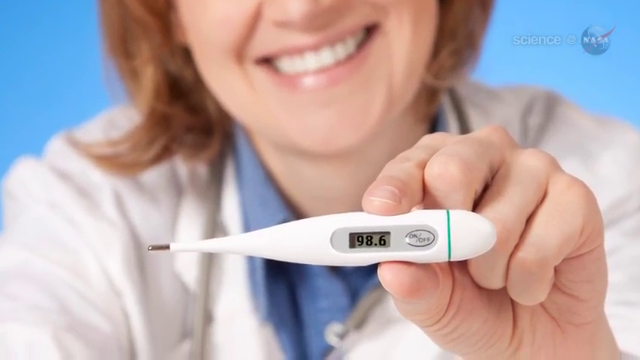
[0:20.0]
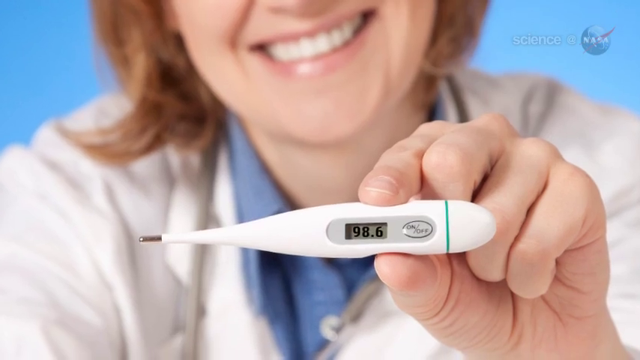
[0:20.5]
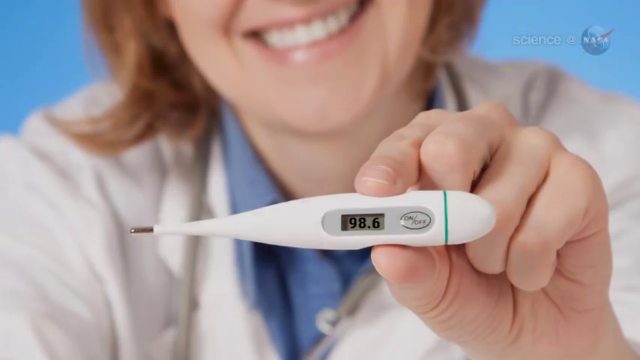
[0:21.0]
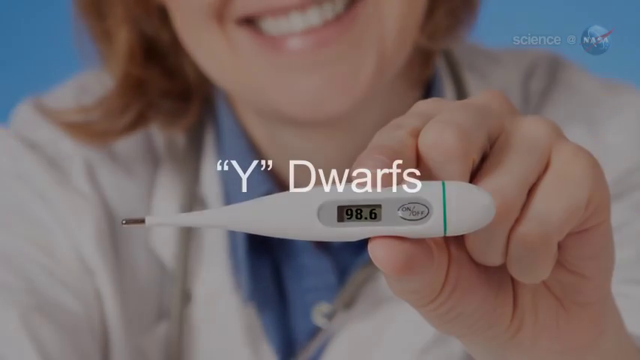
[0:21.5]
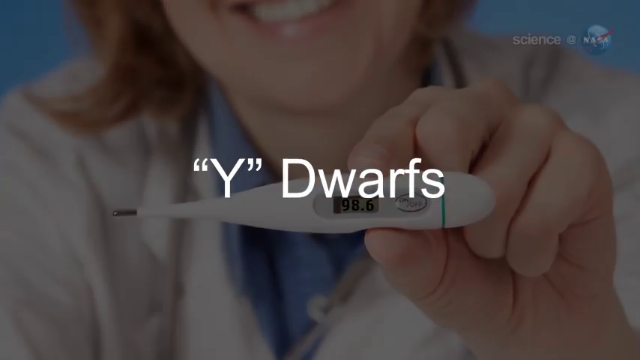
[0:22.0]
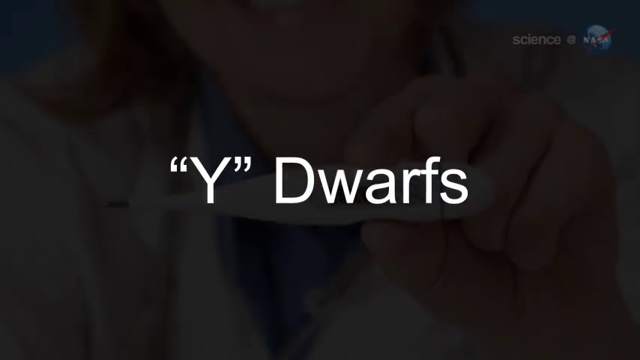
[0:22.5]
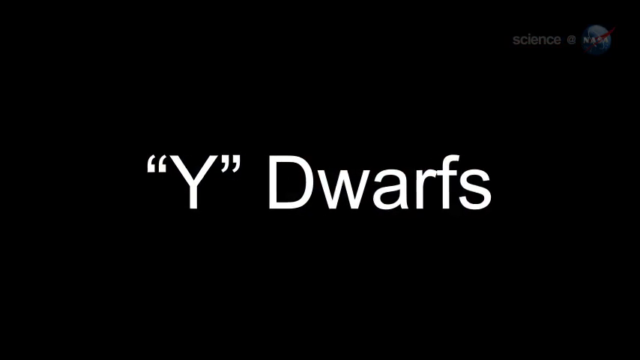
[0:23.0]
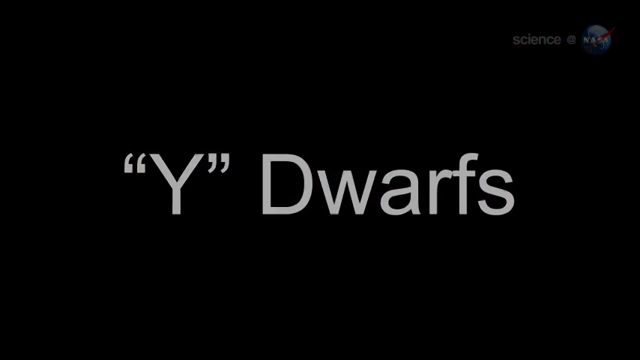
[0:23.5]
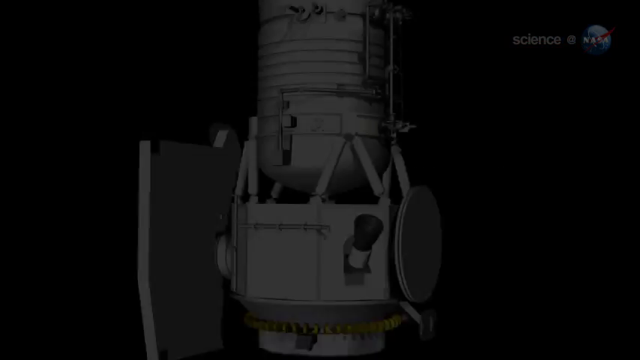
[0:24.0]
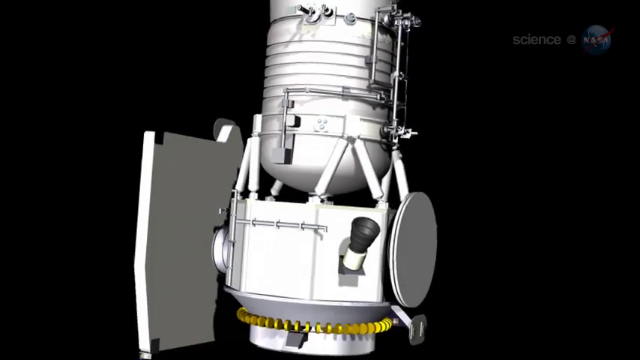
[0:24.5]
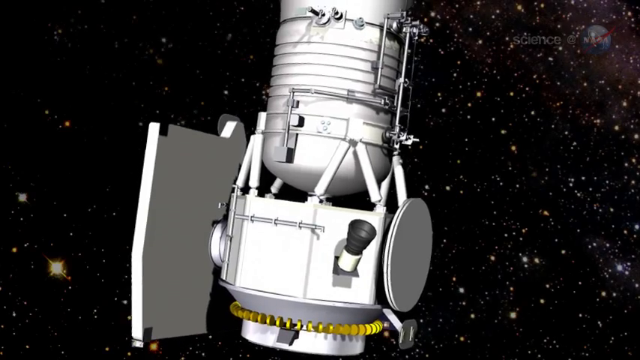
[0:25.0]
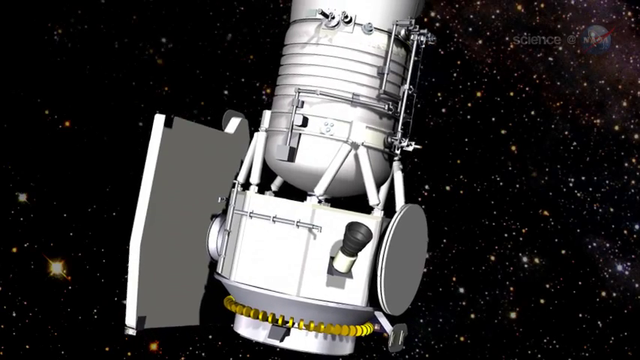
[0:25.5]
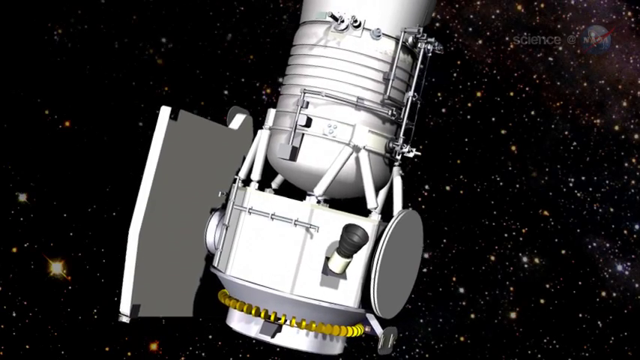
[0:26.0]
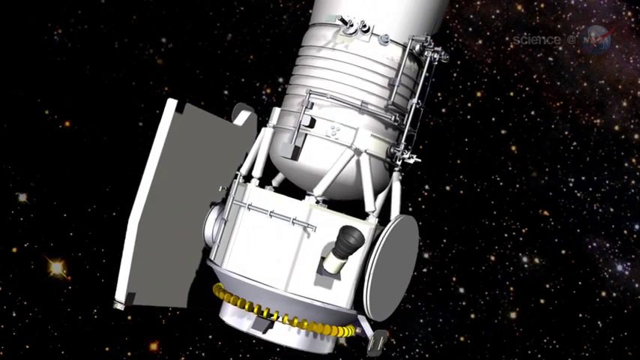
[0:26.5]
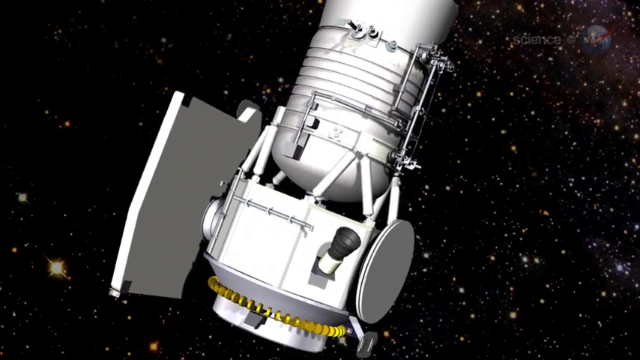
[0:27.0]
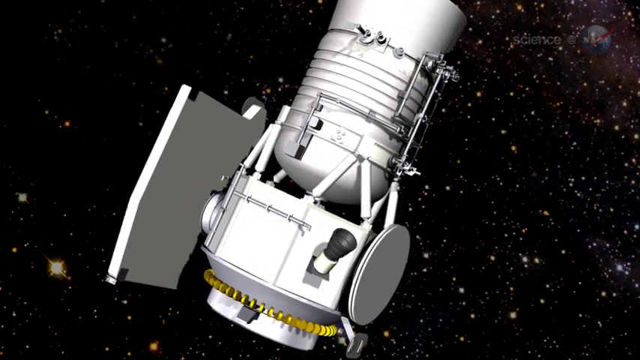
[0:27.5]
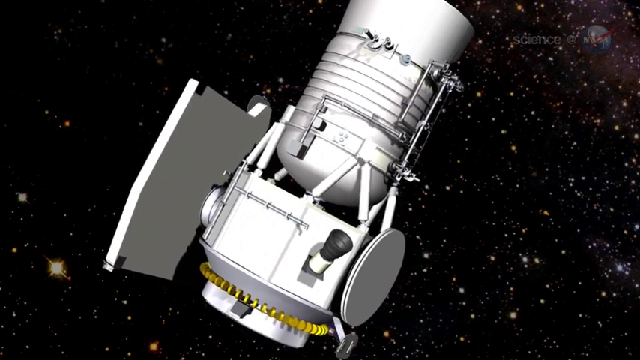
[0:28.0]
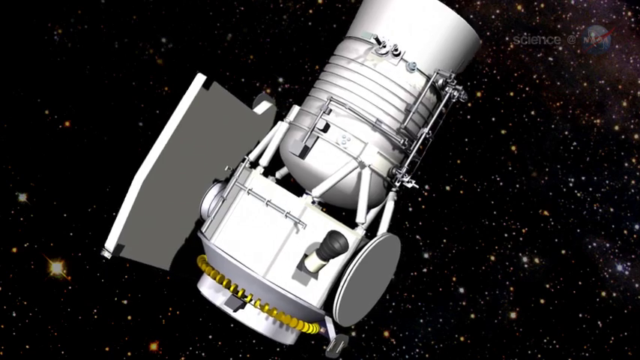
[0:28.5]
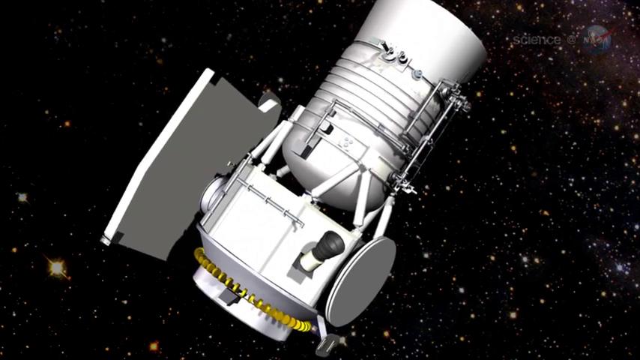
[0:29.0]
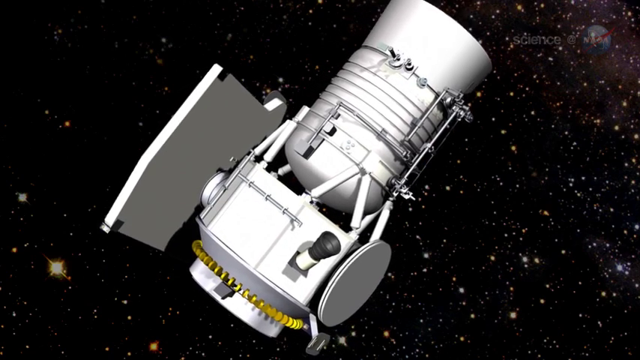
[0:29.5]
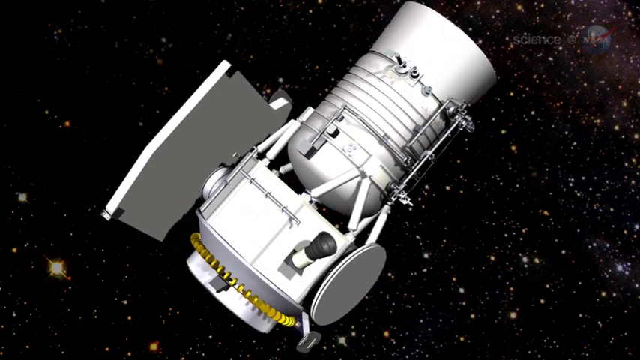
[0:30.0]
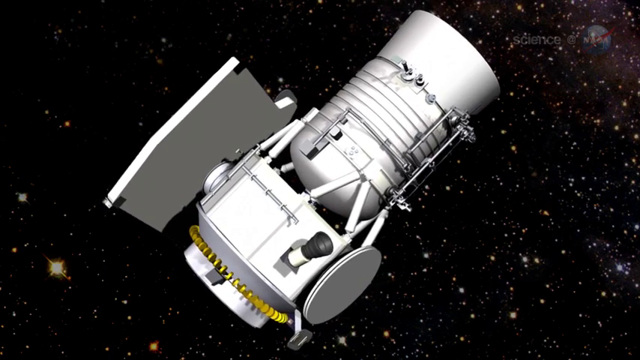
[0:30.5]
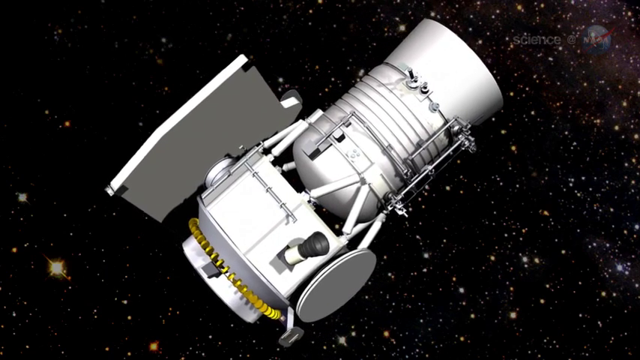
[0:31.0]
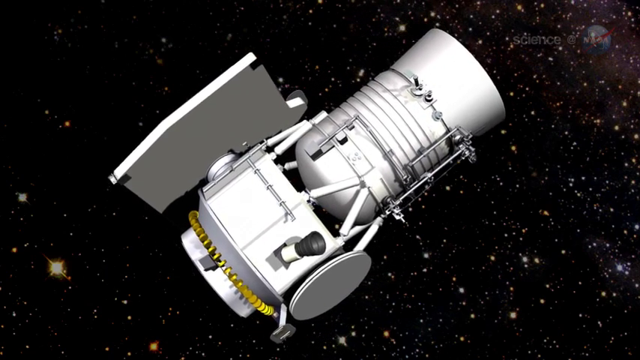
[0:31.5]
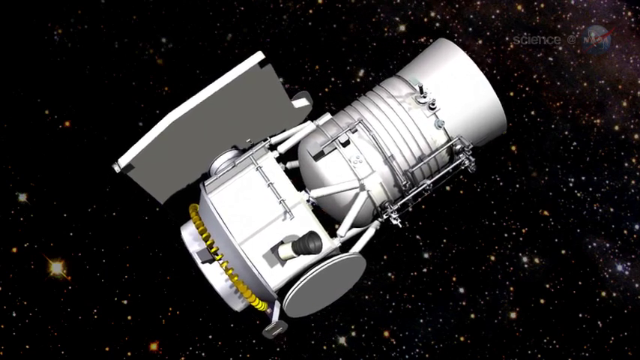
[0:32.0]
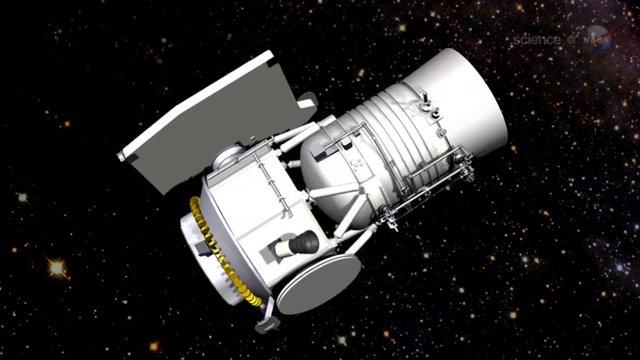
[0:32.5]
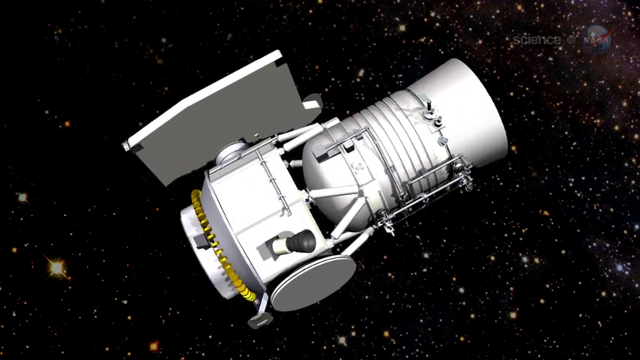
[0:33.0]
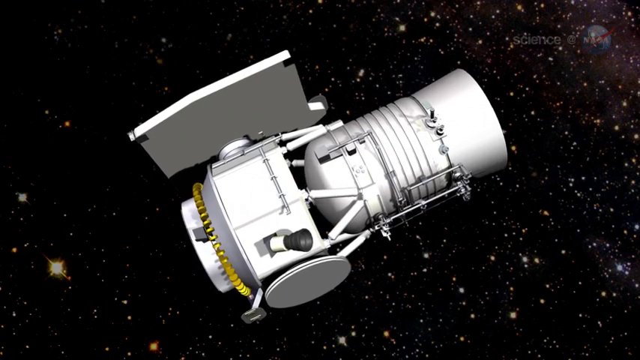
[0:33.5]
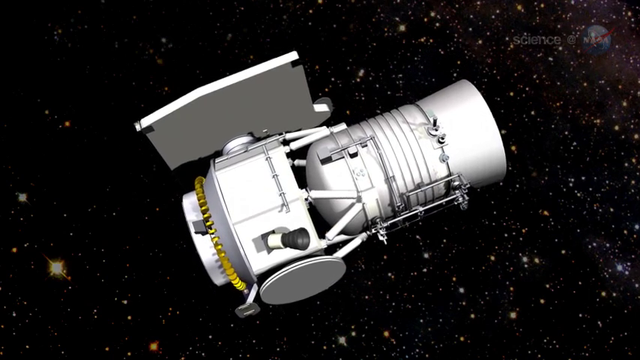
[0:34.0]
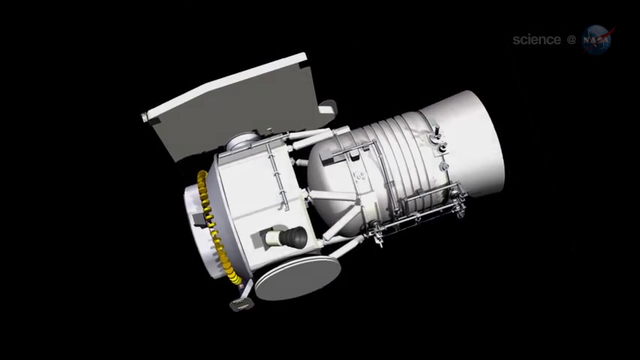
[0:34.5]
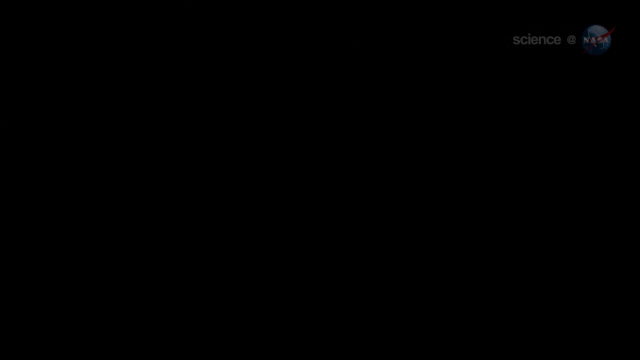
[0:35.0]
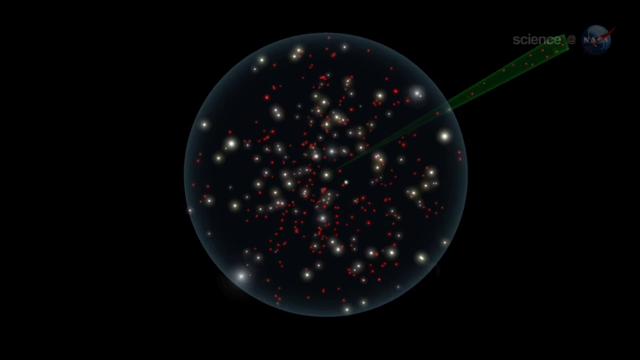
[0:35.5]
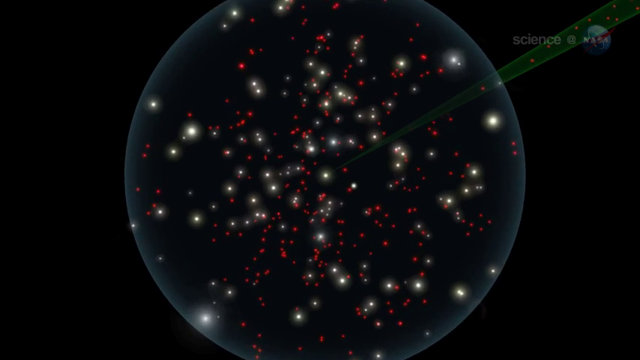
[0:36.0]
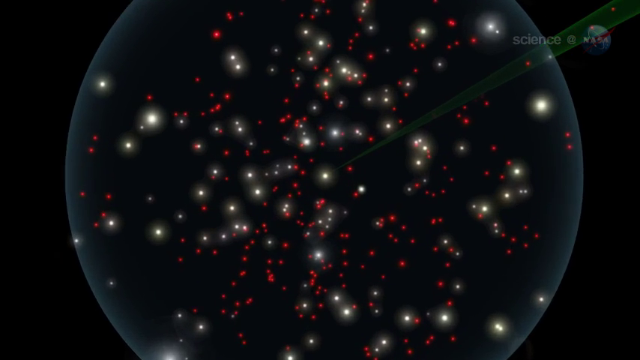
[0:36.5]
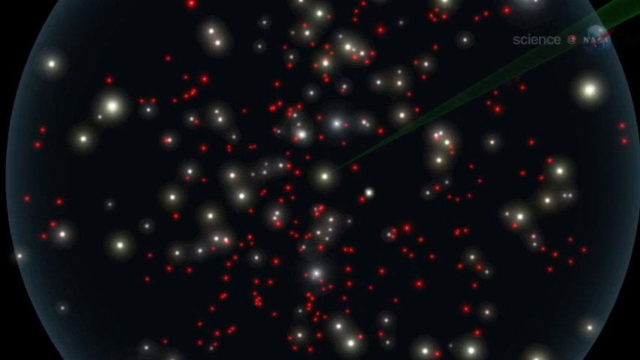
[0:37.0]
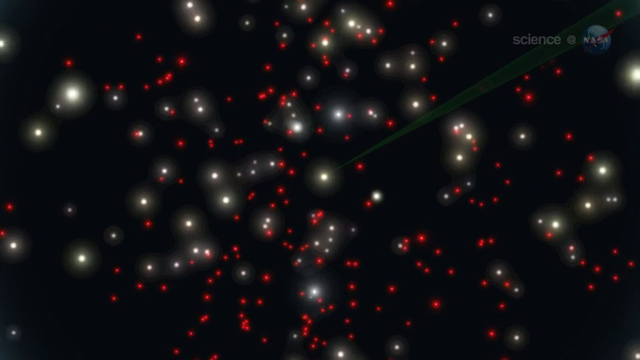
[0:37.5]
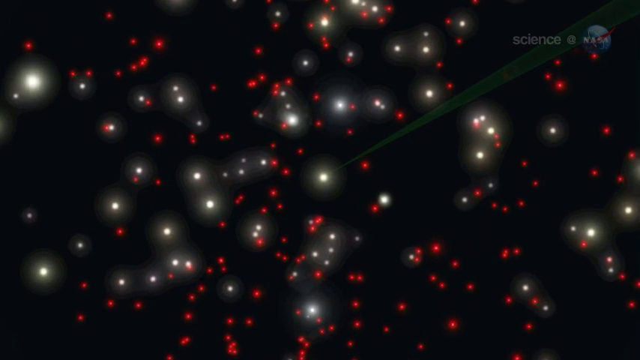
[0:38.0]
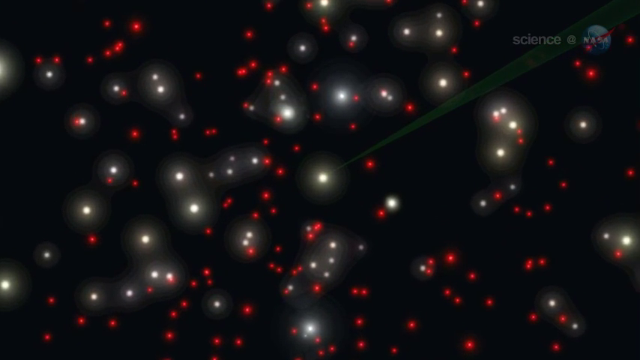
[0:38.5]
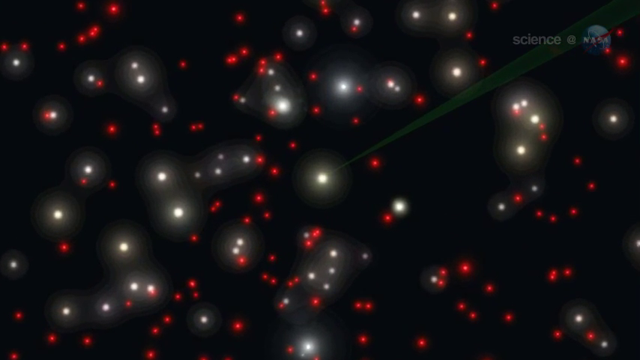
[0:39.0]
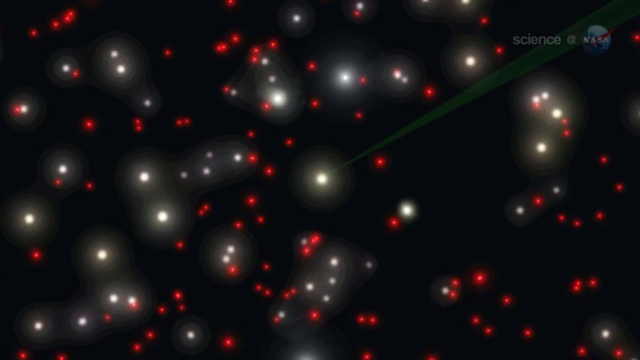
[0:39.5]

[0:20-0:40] The doctor, a woman with orange hair and very clean teeth, smiles happily. She holds the temperature device in her left hand, and the camera zooms in on it. The video cuts to "why rotations" in white text, then to what looks like a machine used in space, apparently a silver metal satellite rotating in space. It disappears, and red and yellow stars are shown in the sky as the camera zooms in very closely on them. There are many stars in the background, and on the left side there is a big star.